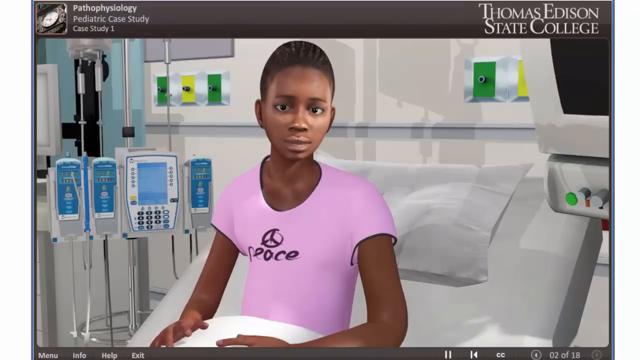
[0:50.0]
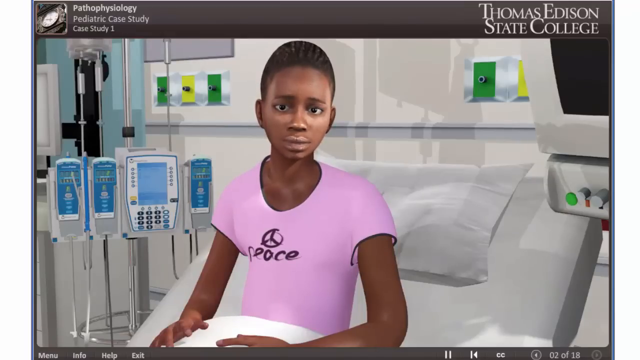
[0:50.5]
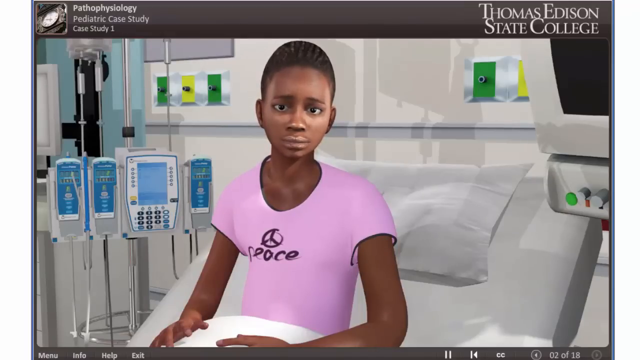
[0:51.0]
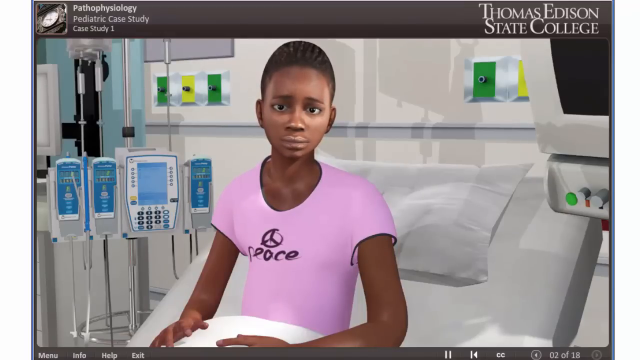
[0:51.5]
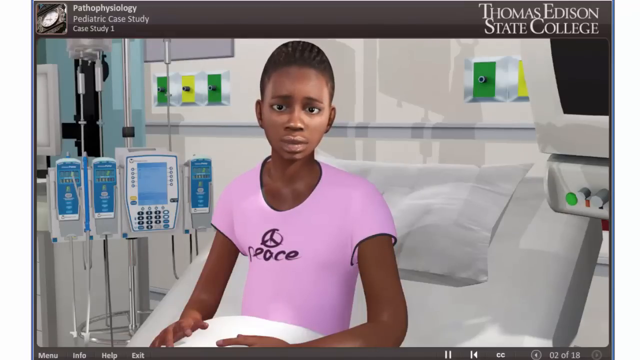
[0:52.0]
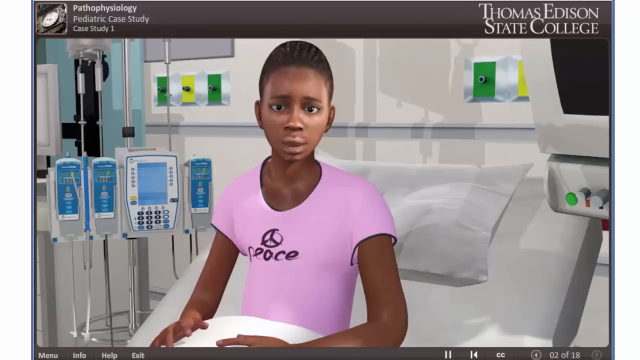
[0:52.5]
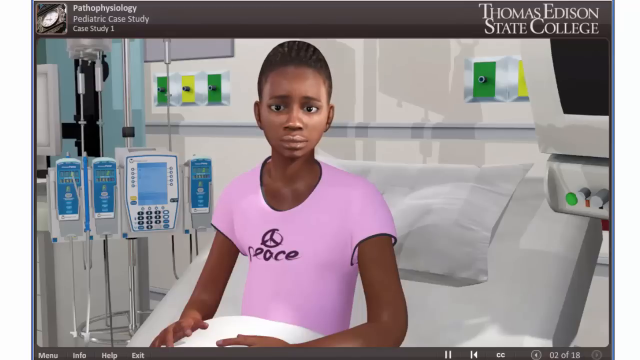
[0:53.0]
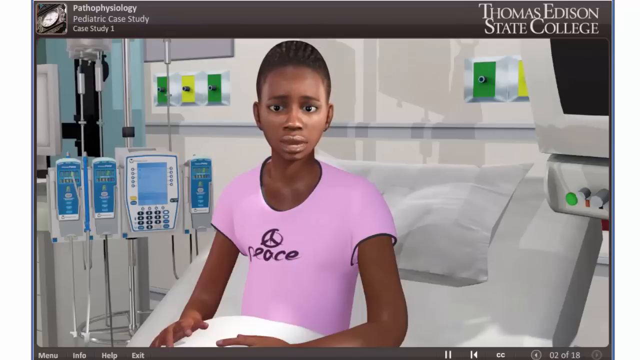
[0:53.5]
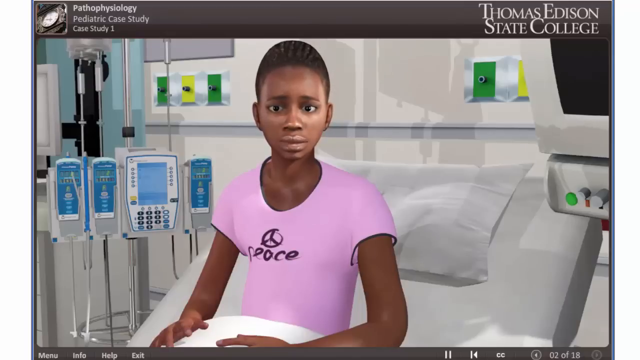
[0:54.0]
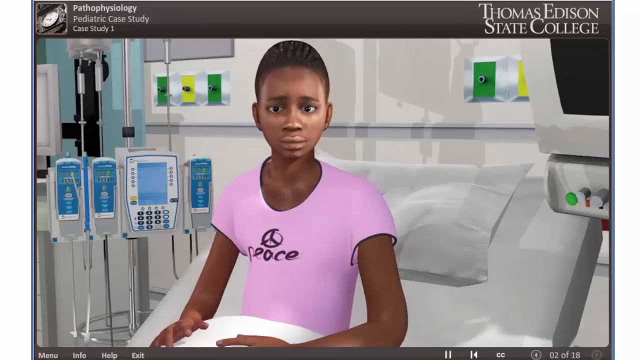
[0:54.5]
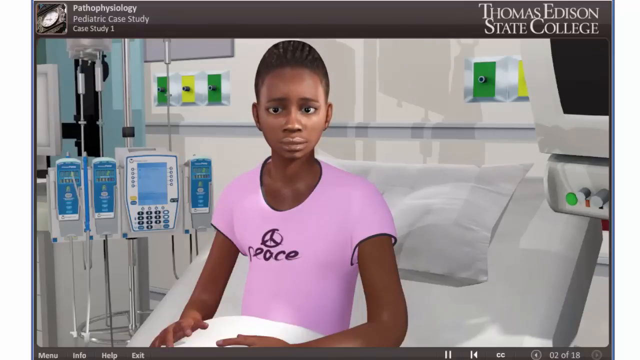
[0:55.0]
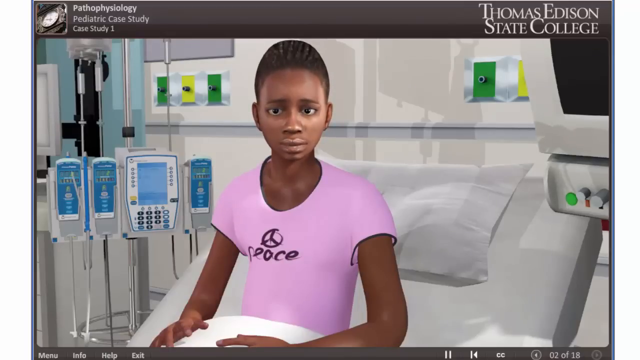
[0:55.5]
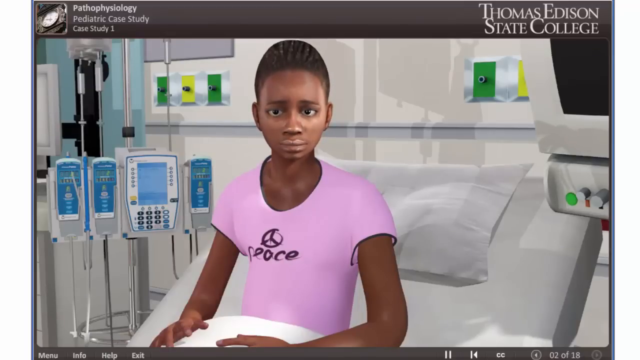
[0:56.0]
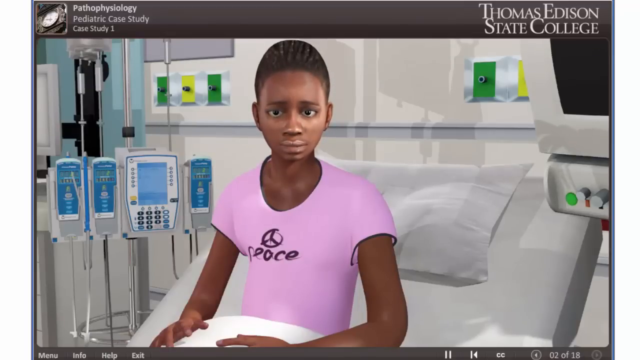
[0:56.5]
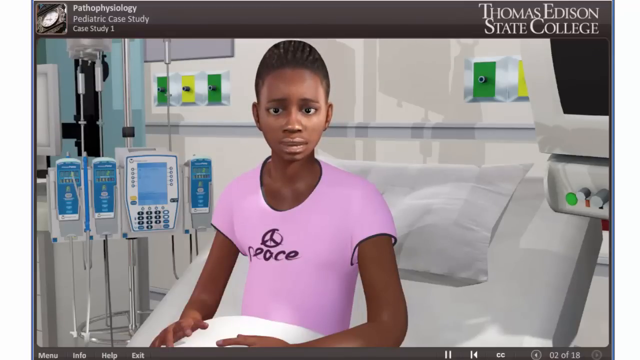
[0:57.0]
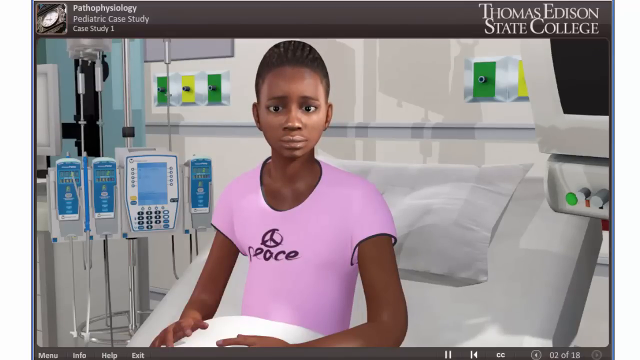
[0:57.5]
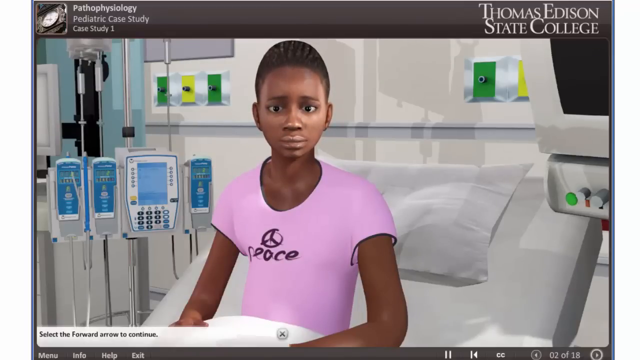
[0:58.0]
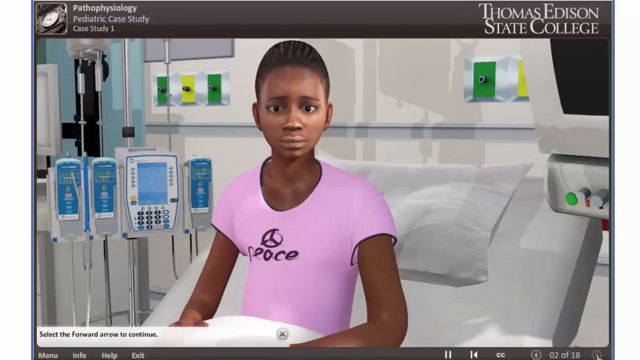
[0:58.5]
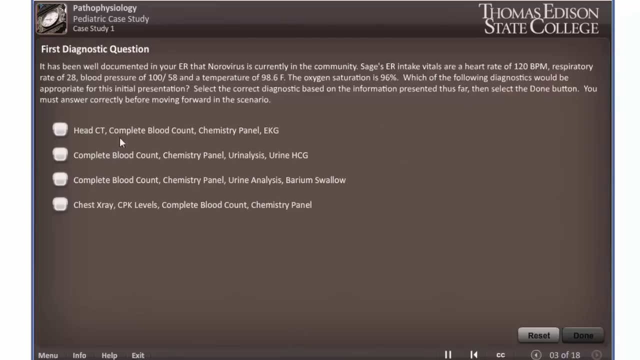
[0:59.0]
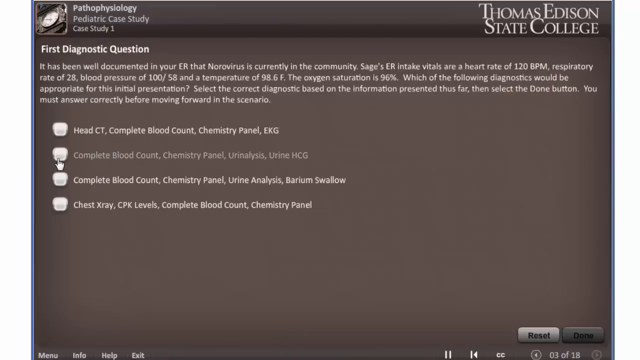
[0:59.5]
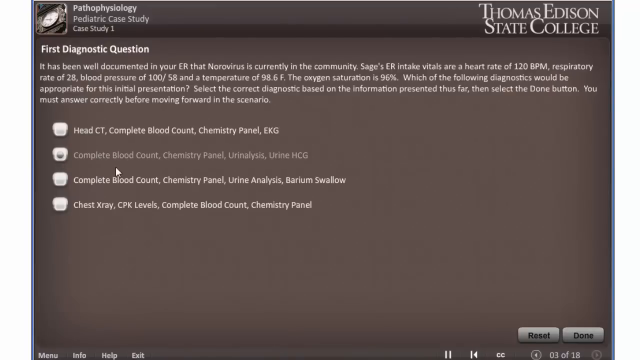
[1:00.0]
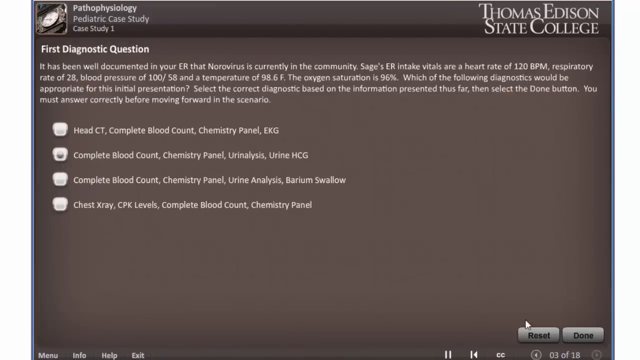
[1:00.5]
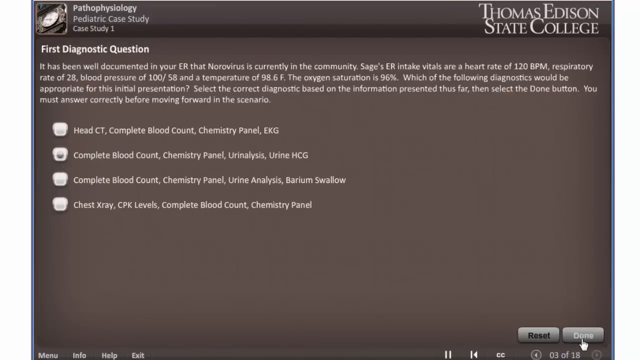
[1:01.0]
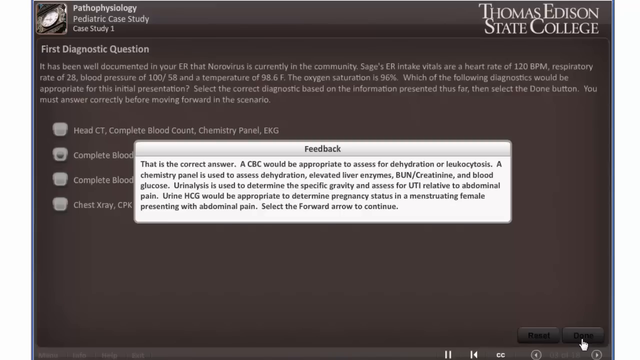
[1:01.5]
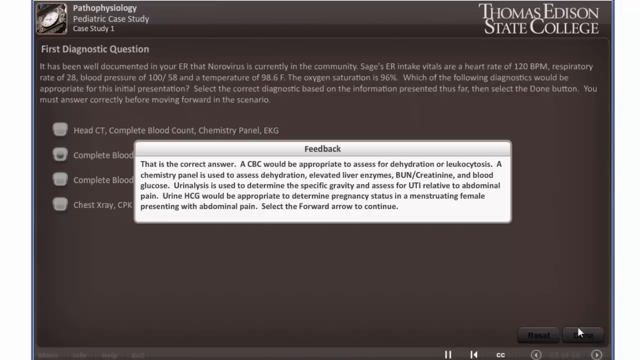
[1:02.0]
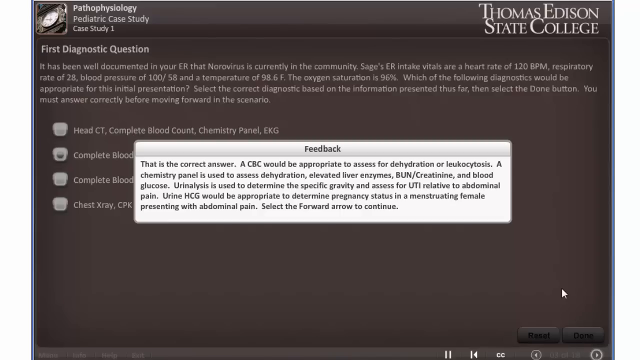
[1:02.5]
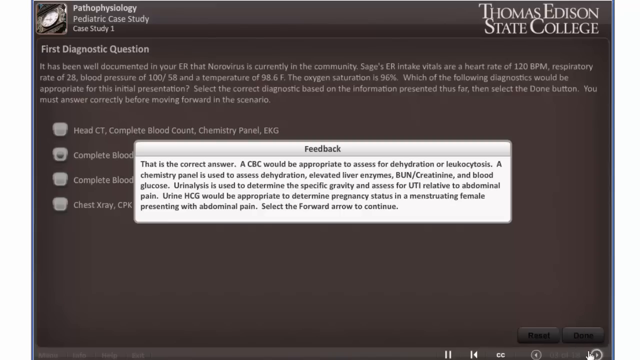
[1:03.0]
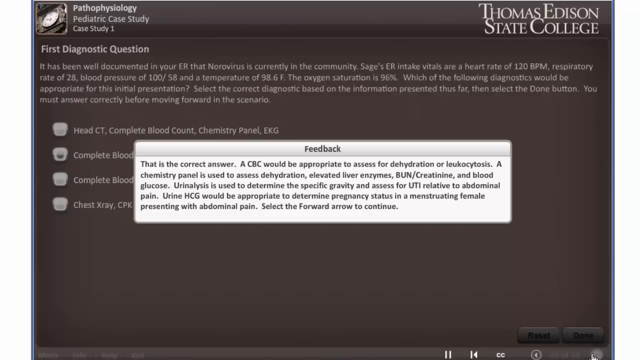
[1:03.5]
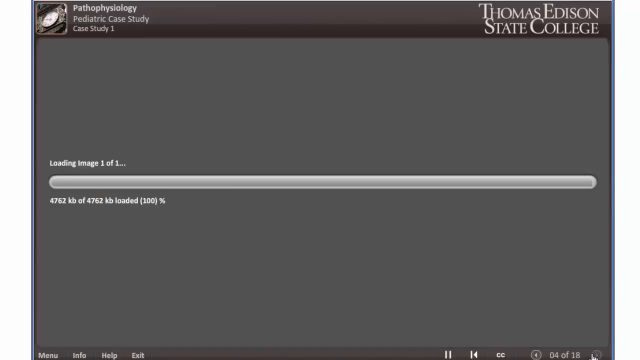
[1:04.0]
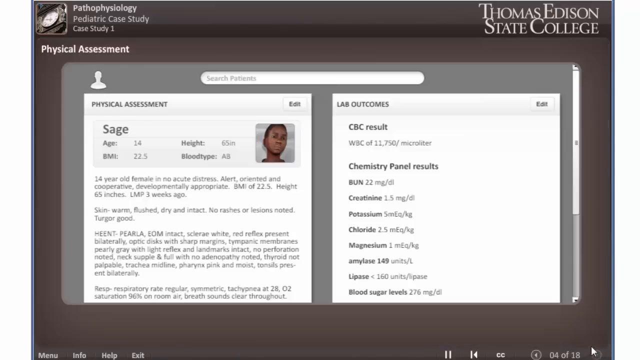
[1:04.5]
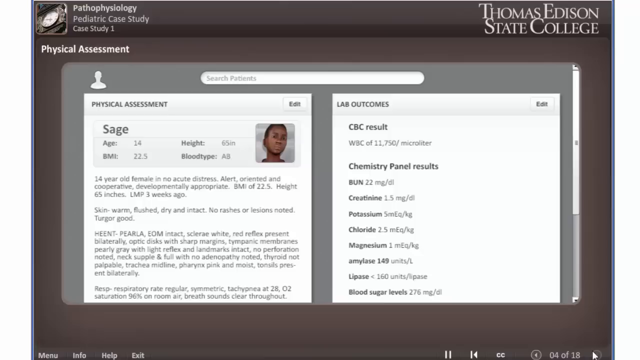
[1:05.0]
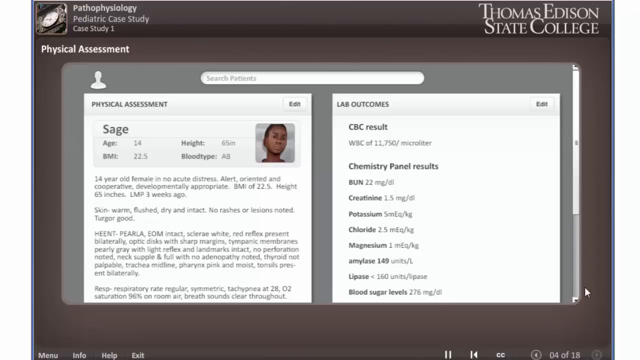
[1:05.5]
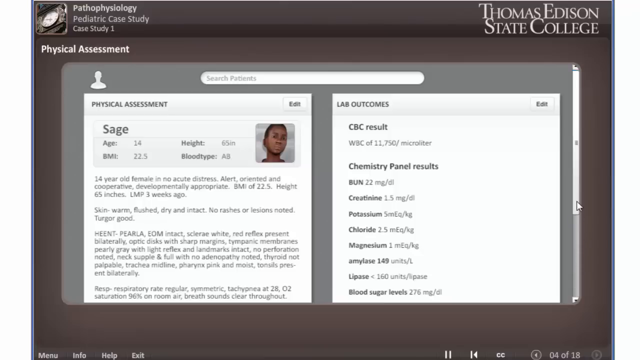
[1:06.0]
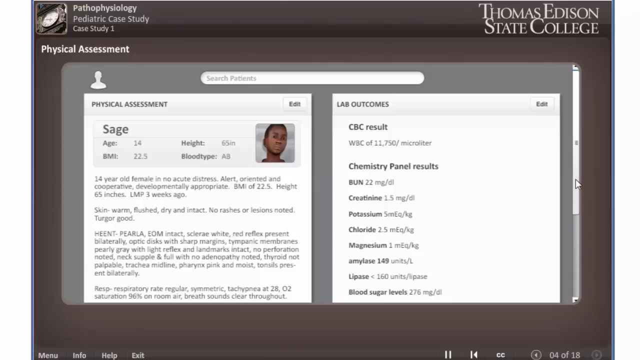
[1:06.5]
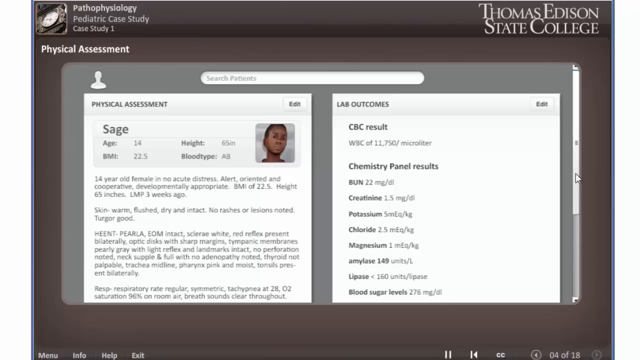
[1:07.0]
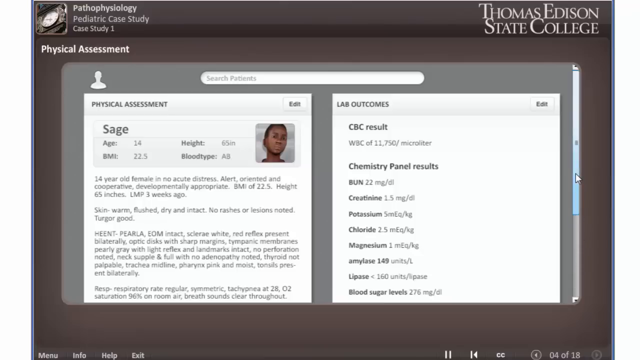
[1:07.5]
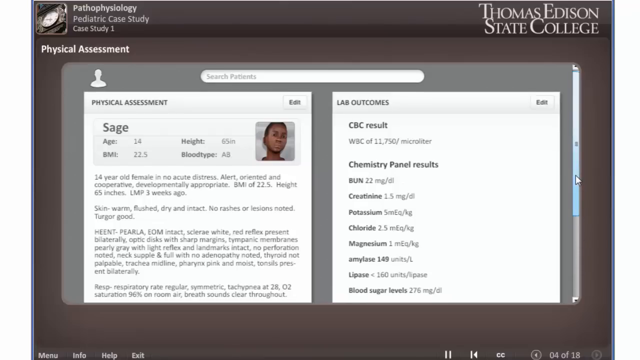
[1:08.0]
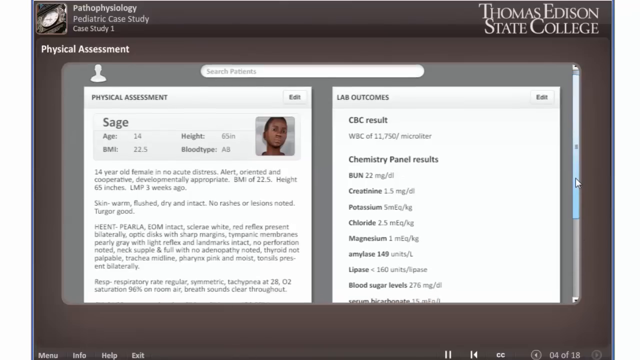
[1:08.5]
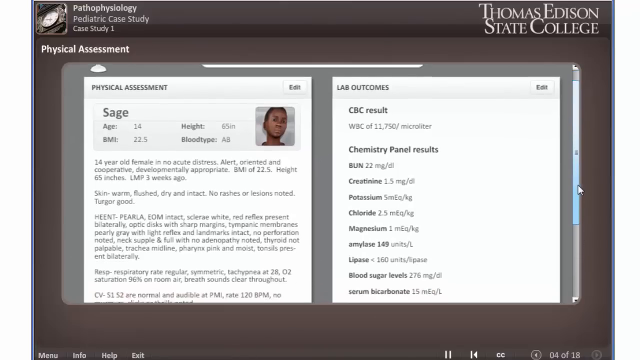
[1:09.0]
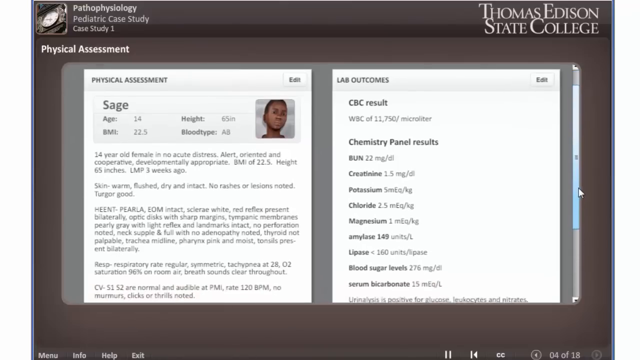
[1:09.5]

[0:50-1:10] "Thomas Edison State College" is in the upper right-hand corner, and "pathophysiology" is in the upper left-hand corner, with "pediatric case study" underneath it and "case study one" underneath that. The child appears in a short-sleeved purple shirt reading "PEACE" with a peace sign. She is sitting up at first, and her mouth is moving as she talks; she is somewhat animated and blinks a little, not often. Text then reads "first diagnostic question". The first answer is selected, and the text says it is the correct answer. Explanatory text follows, including a test whose letters are possibly A-B-C or C-B-C "would be appropriate to assess for dehydration", a partly legible word beginning "L-E-U-K", "A chemistry panel is used to assess dehydration, elevated liver enzymes, BUN, and blood glucose. They will have to analyze her urine to determine the specific gravity and assess for UTI relative to abdominal pain", a line about pregnancy status "in a menstruating female presenting with abdominal pain", and "Select the forward arrow to continue." Then text reads "This is Sage, age 14, BMI 22.5", and the blood type looks like AB.